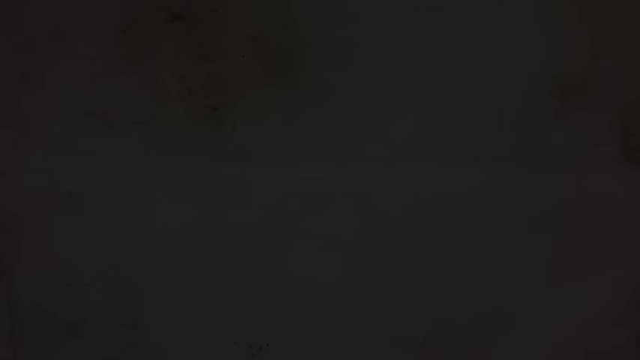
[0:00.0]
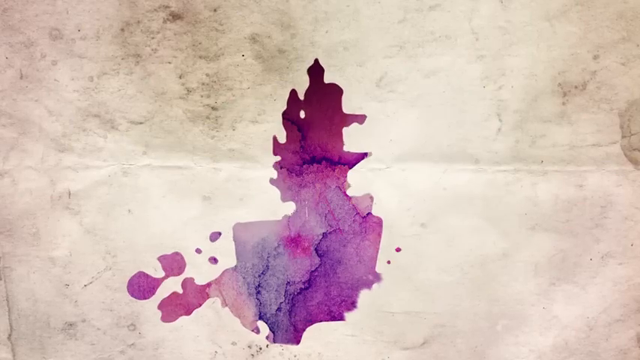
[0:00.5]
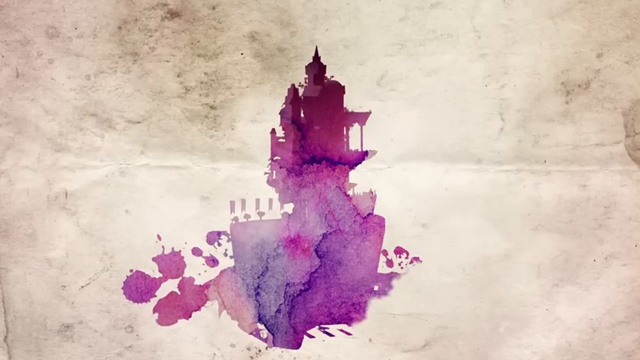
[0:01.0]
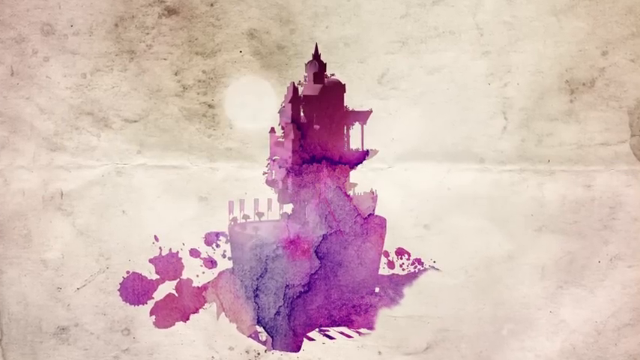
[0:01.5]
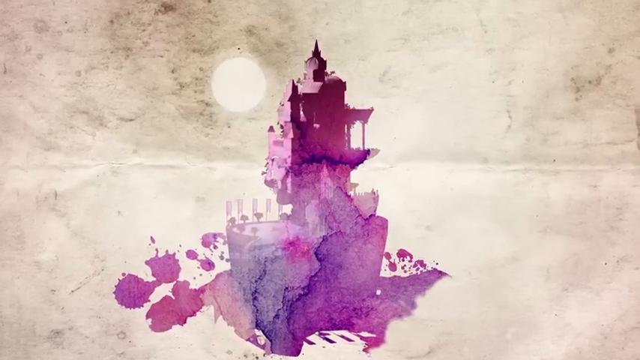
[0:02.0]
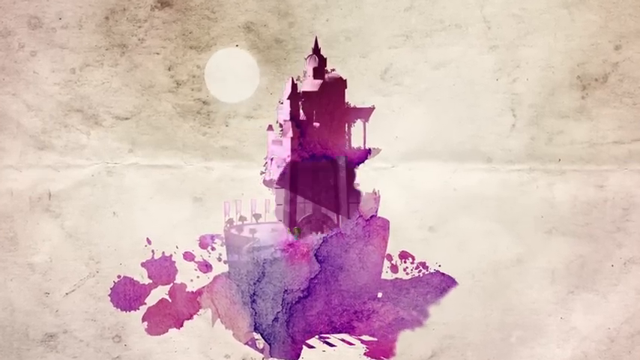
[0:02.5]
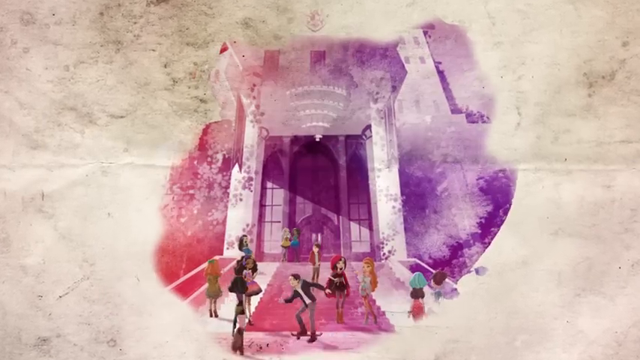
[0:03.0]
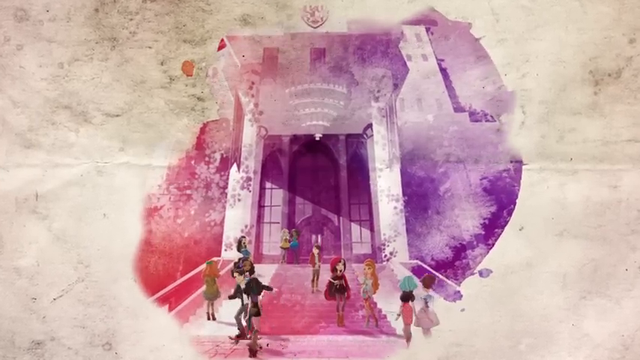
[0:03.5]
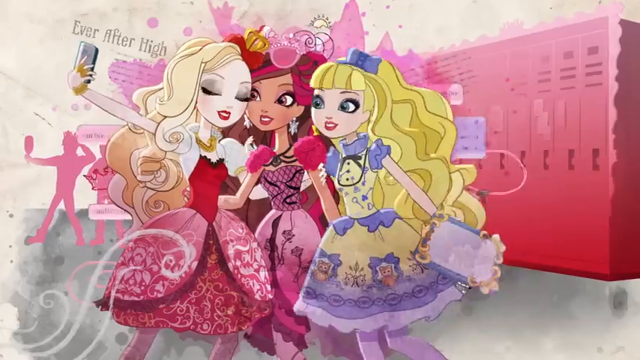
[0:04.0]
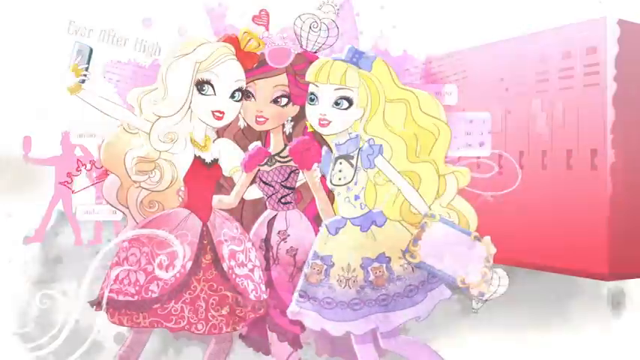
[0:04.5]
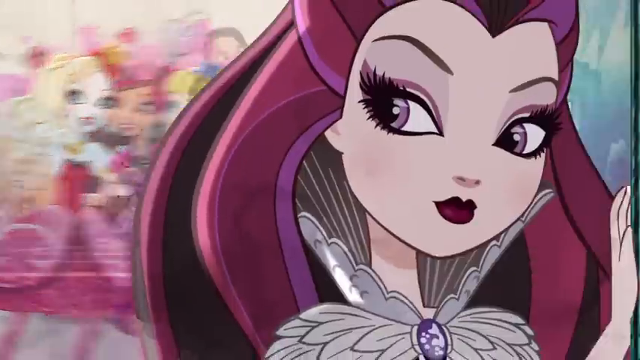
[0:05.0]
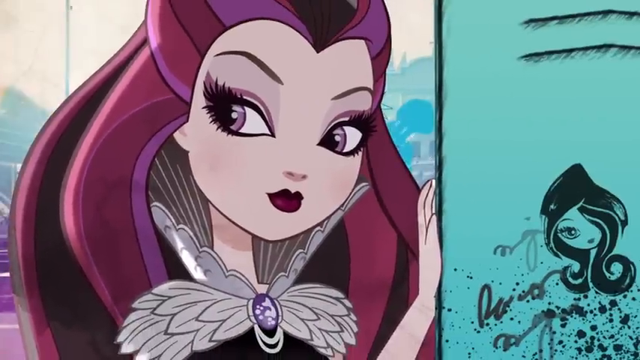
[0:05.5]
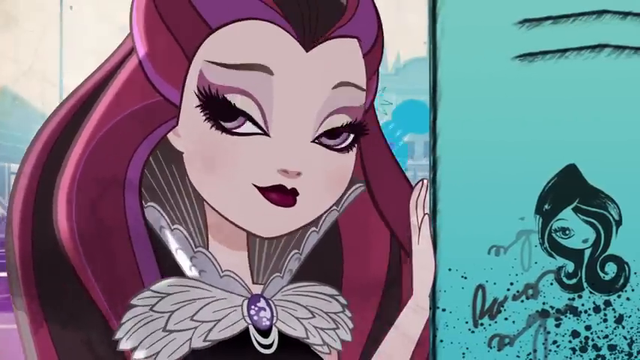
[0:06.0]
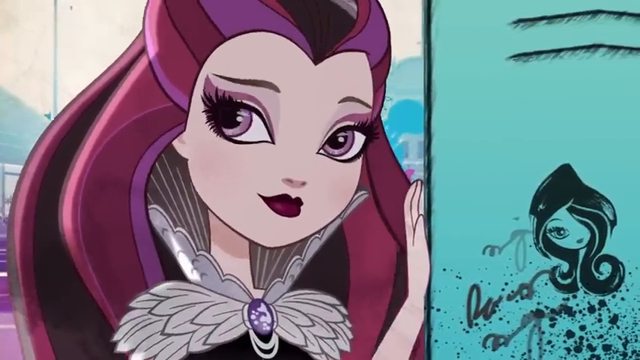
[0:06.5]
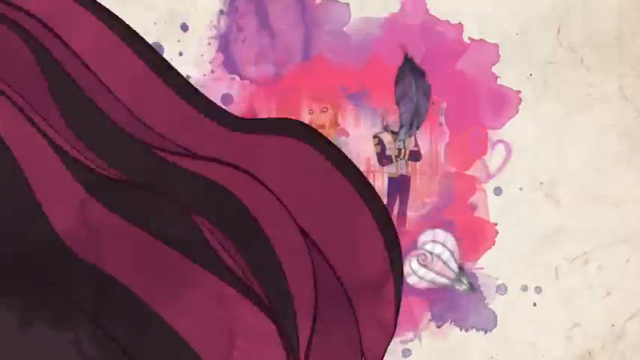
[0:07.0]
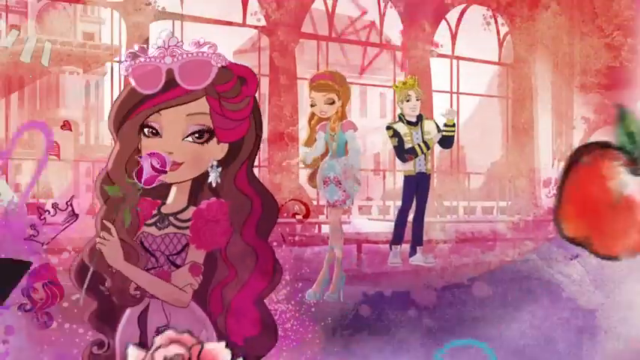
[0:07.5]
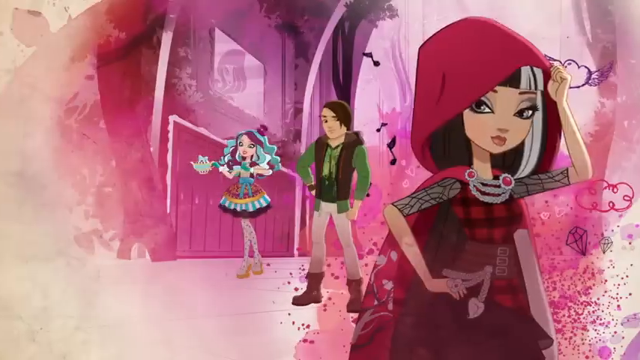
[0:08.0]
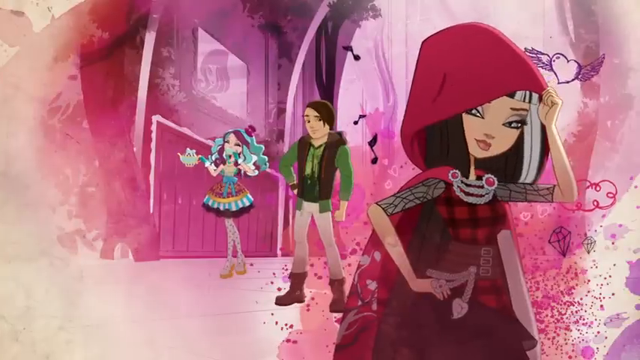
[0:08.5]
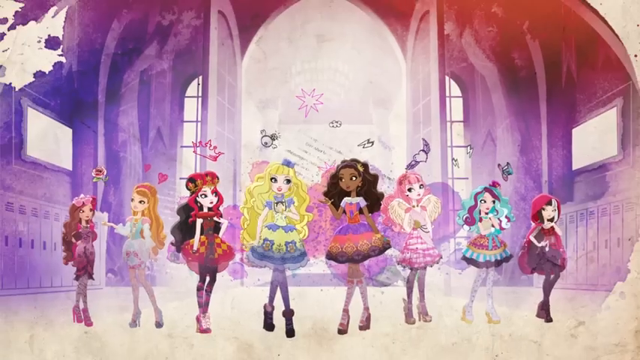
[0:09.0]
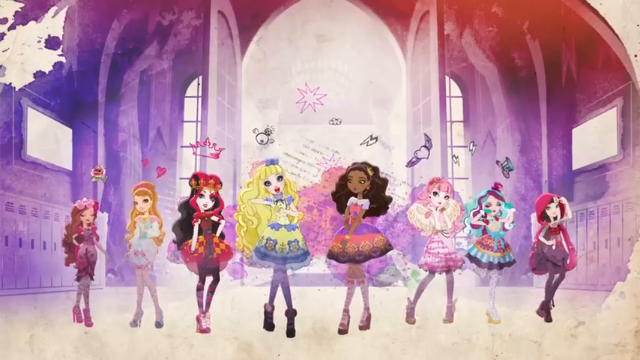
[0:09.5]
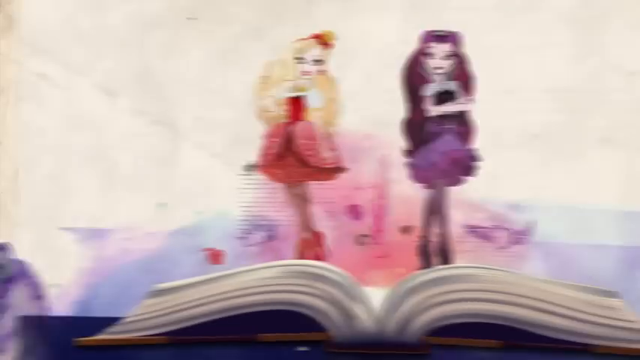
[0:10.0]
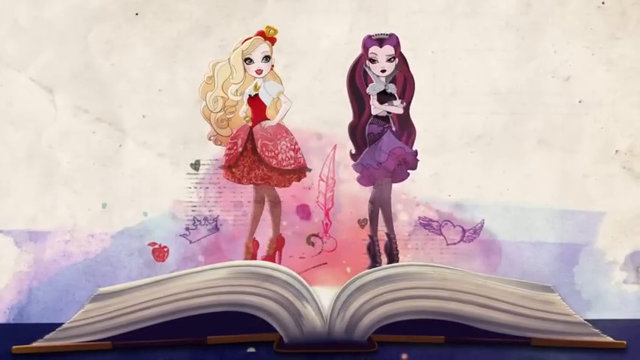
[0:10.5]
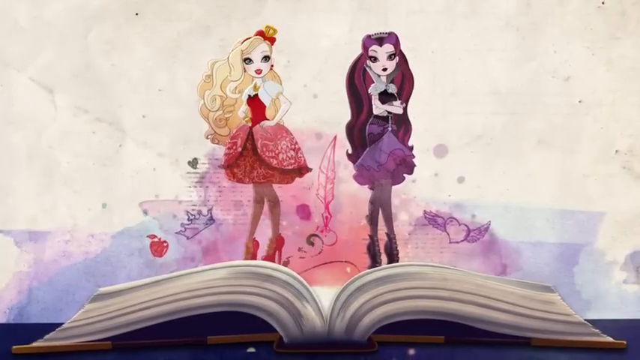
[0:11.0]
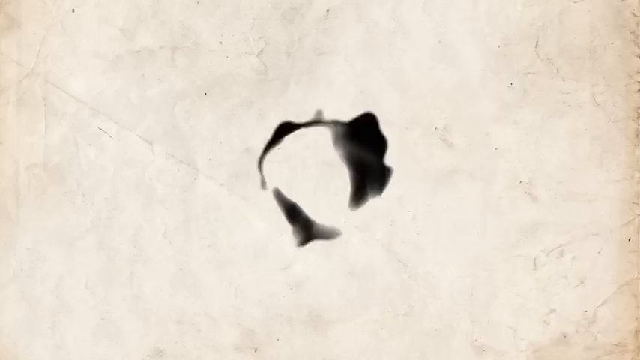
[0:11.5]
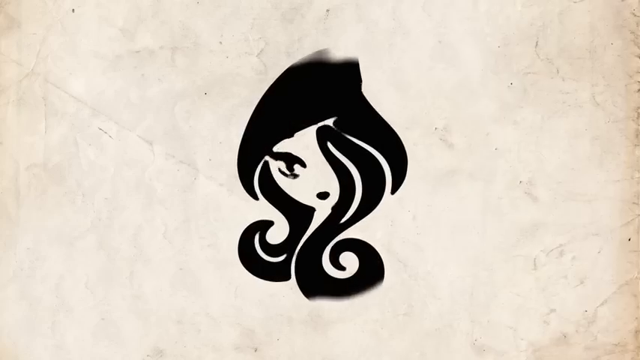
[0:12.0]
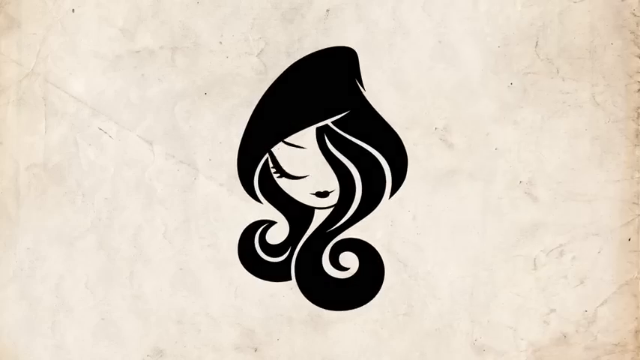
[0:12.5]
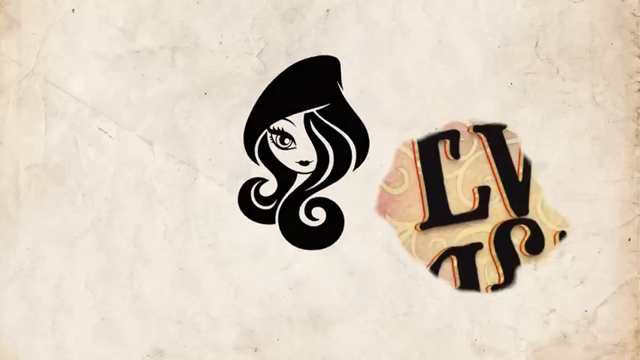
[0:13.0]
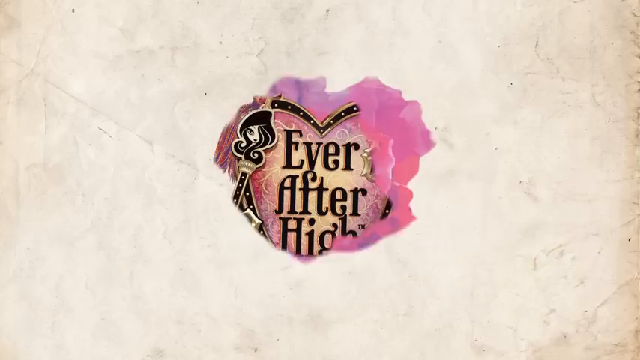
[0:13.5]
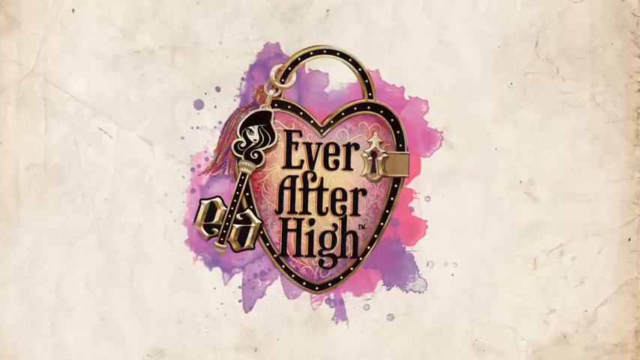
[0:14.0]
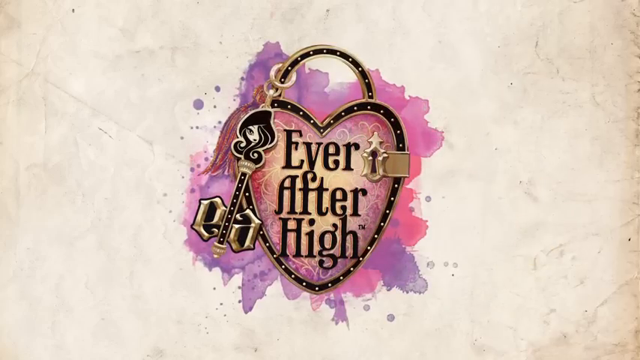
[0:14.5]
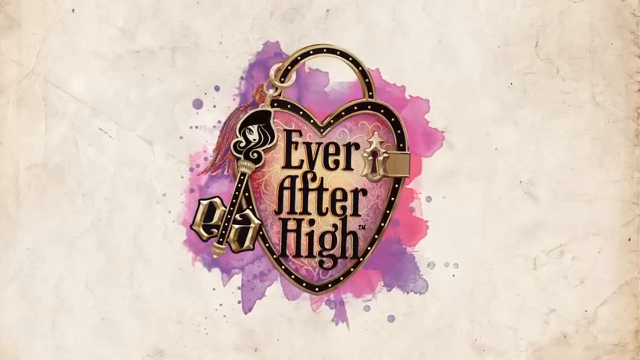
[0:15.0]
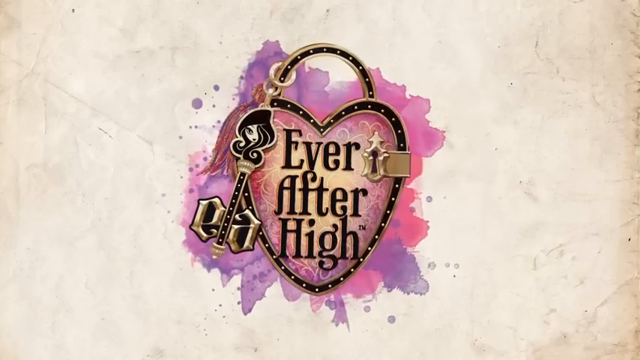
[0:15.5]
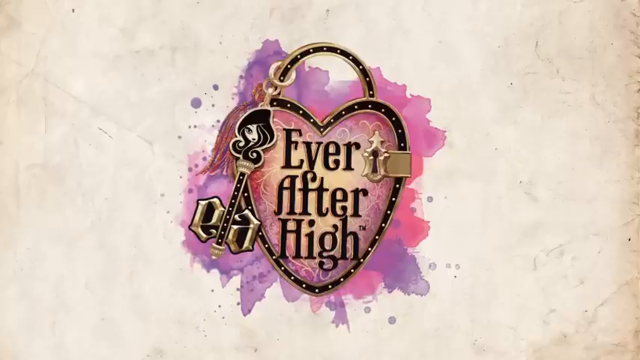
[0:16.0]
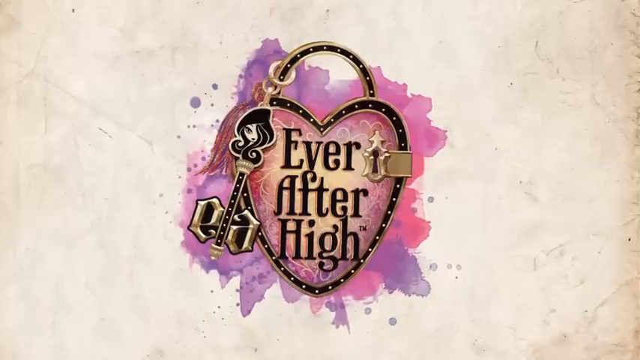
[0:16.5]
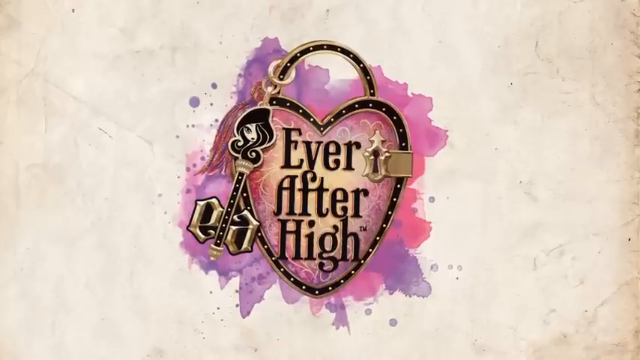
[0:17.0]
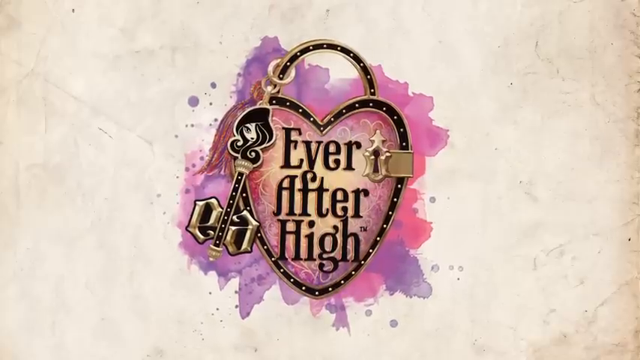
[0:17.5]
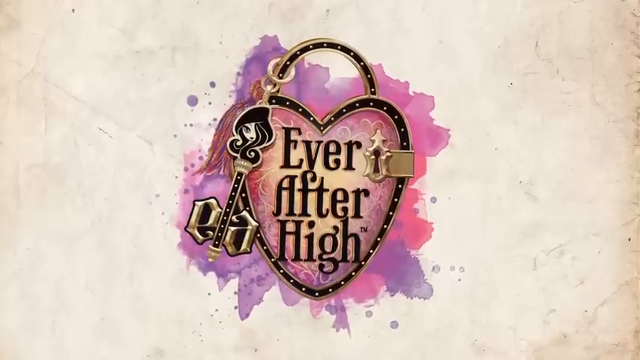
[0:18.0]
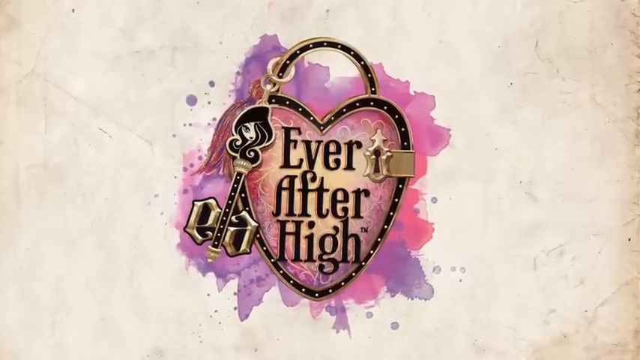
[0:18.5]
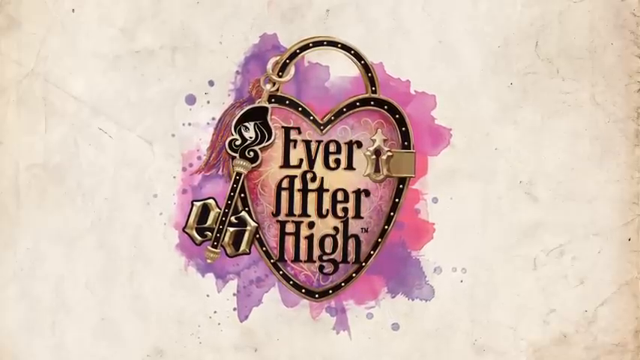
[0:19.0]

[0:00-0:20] The video opens with a very colorful splash of a pink and purple color mixture that forms a castle-looking shape. It splashes again with more pink, purple and red, and a bunch of characters appear along the bottom, each in very distinct colors of their own. It then switches to three girls taking a group selfie; they all look like princesses of some kind. "Ever After High" appears in the top left, so this is apparently the opening for a cartoon. After the selfie, another girl seems to scoff it off as some sort of funny business. Next come introductions of another couple of girls and a guy, then another couple of girls and a gentleman. Eight different girls stand in front of an entryway. A black silhouette of a girl's face then forms on a key, which appears on a locket that says "Ever After High". After a few seconds, it fades away.